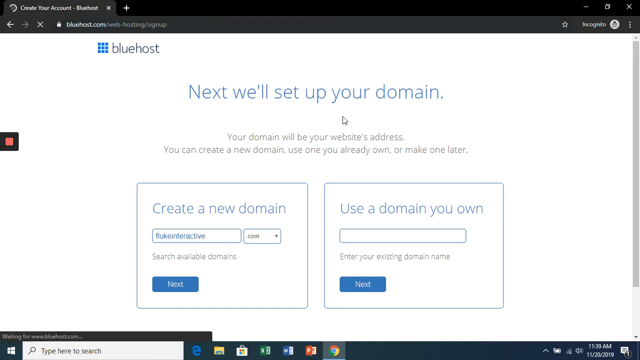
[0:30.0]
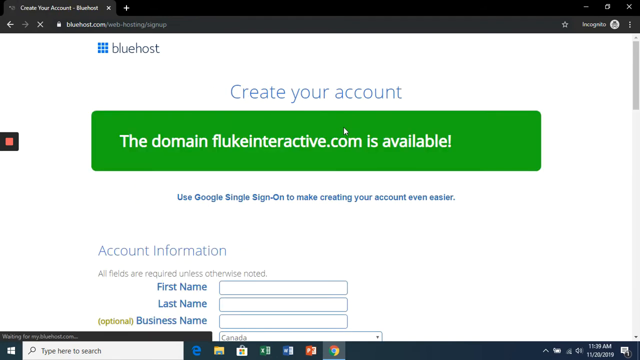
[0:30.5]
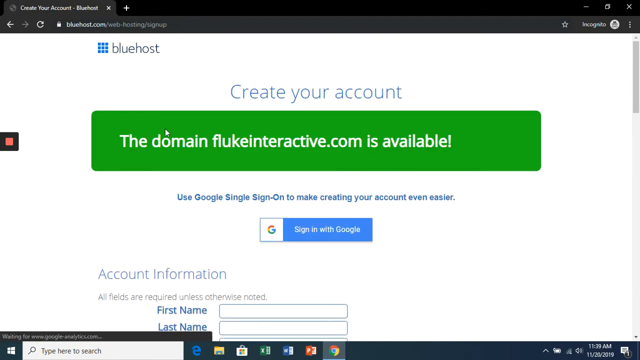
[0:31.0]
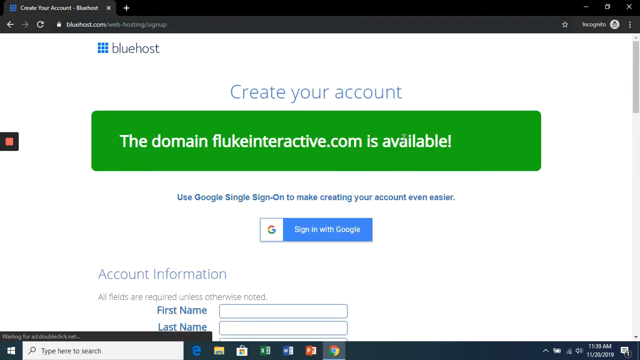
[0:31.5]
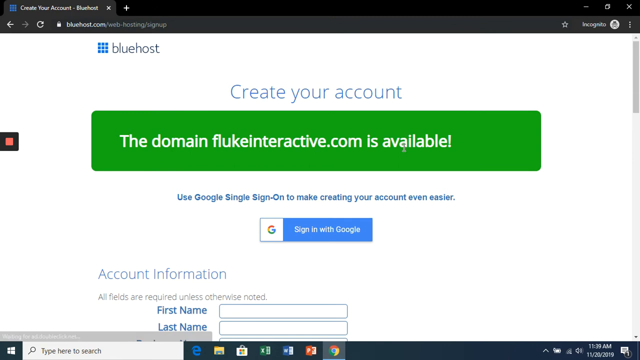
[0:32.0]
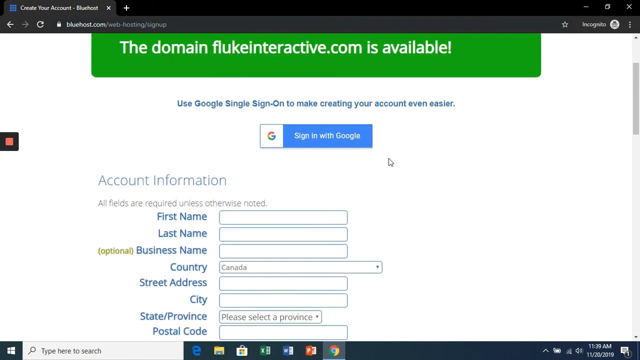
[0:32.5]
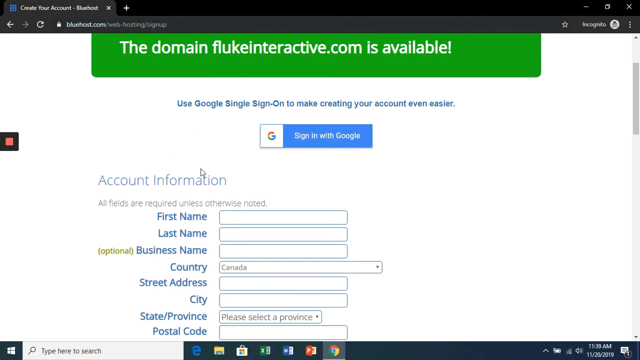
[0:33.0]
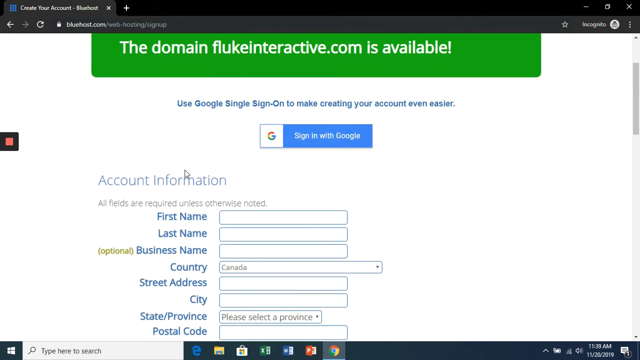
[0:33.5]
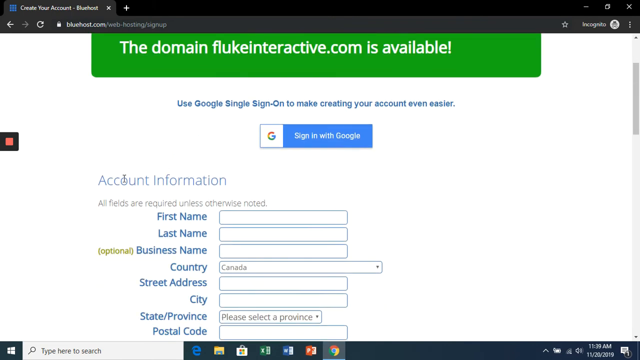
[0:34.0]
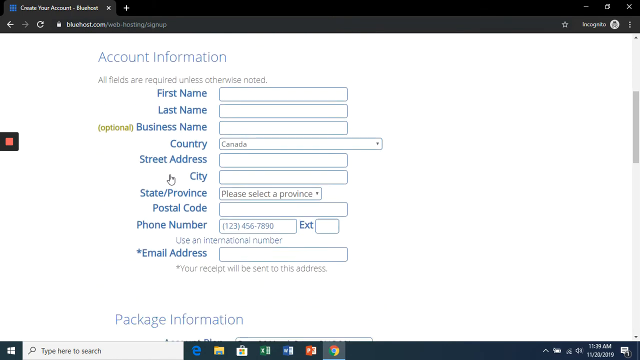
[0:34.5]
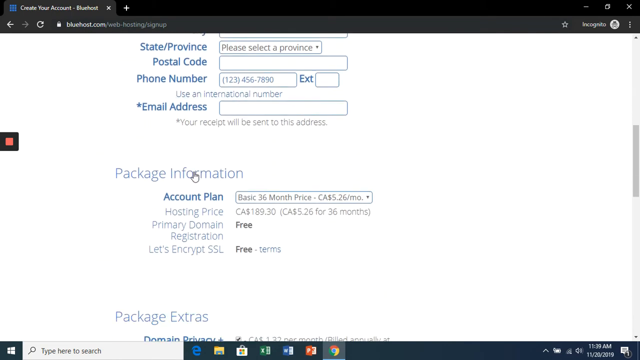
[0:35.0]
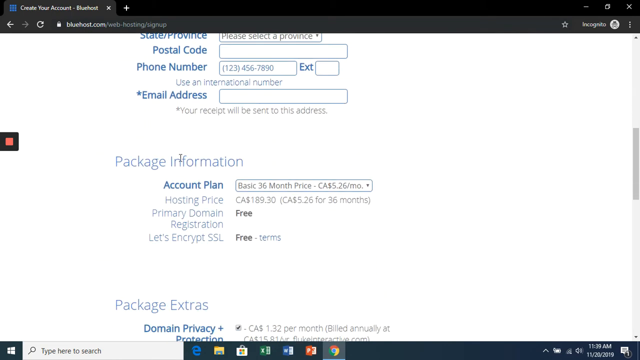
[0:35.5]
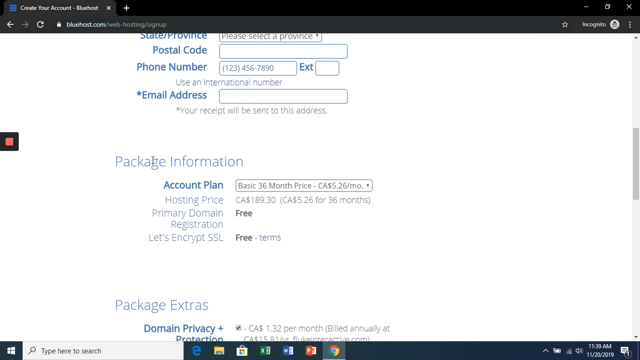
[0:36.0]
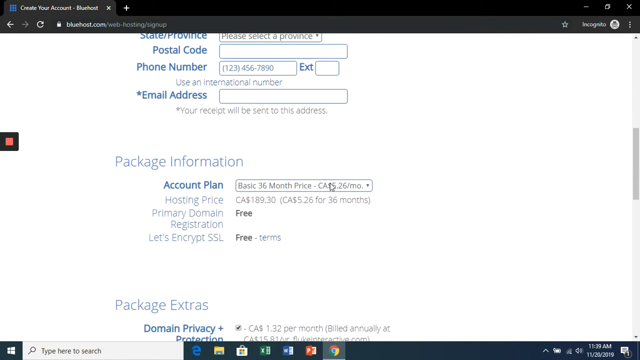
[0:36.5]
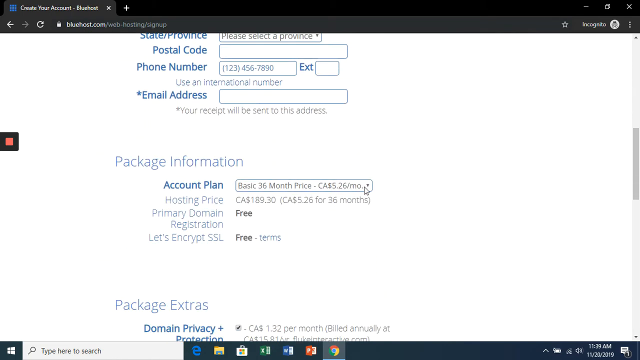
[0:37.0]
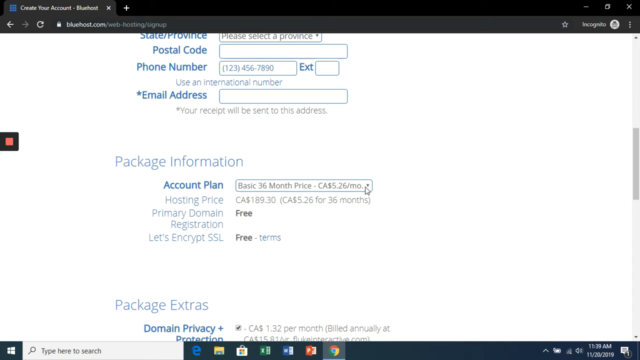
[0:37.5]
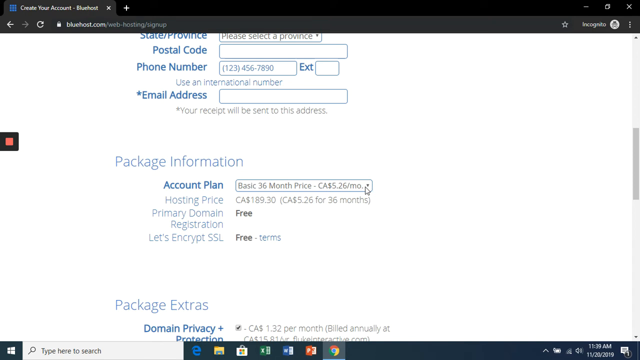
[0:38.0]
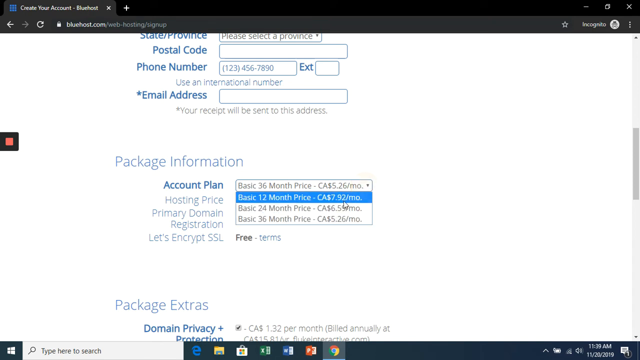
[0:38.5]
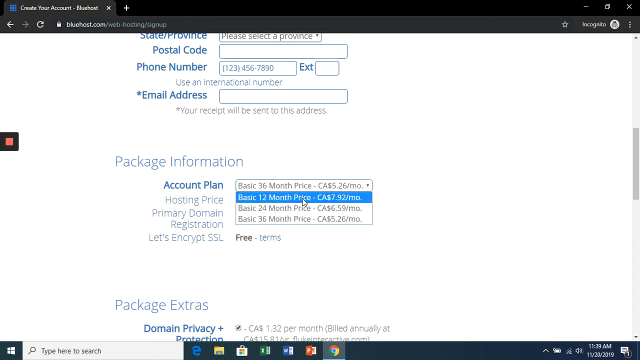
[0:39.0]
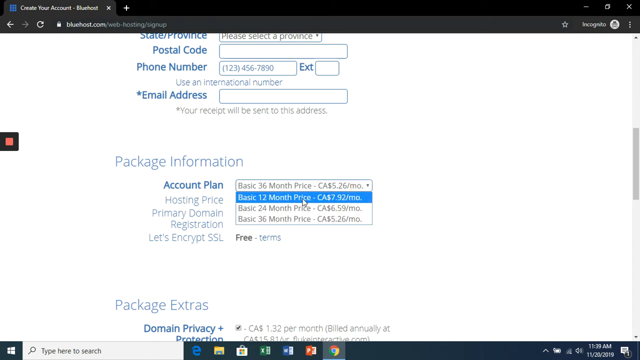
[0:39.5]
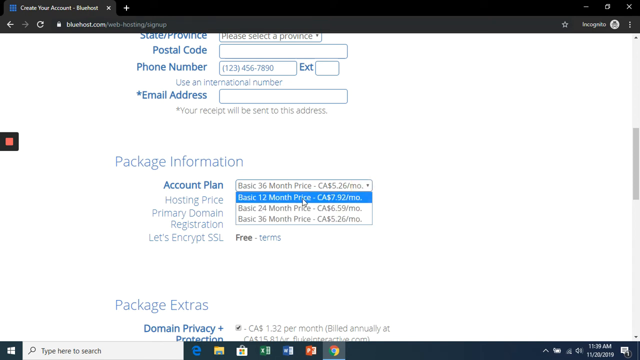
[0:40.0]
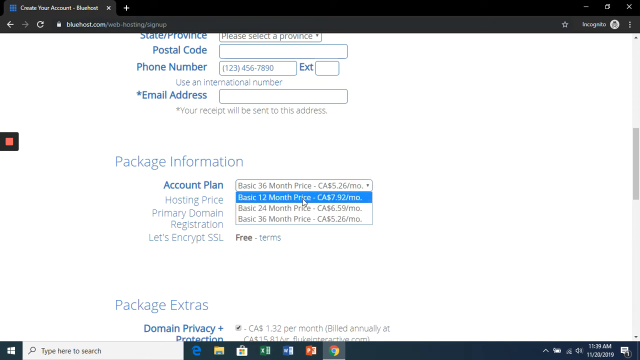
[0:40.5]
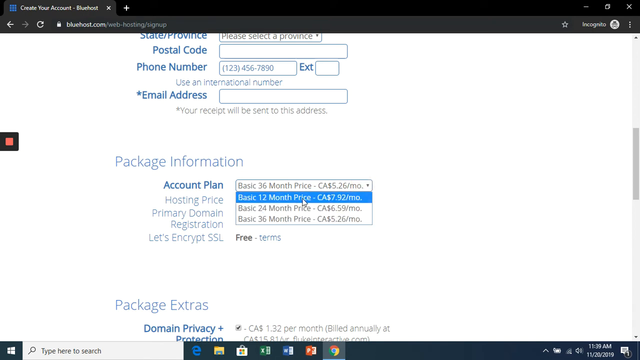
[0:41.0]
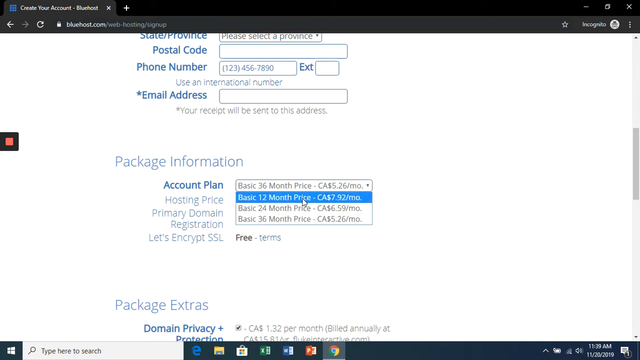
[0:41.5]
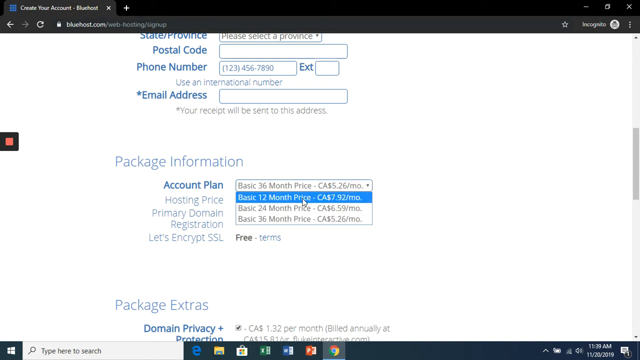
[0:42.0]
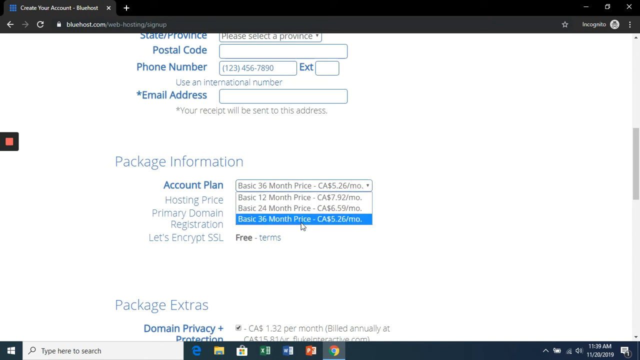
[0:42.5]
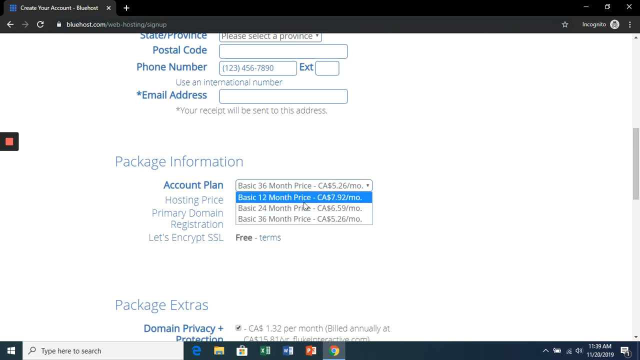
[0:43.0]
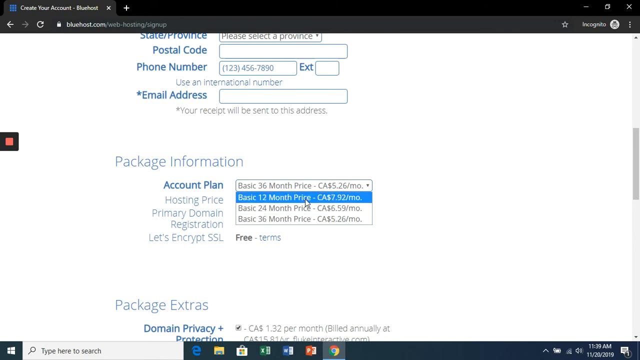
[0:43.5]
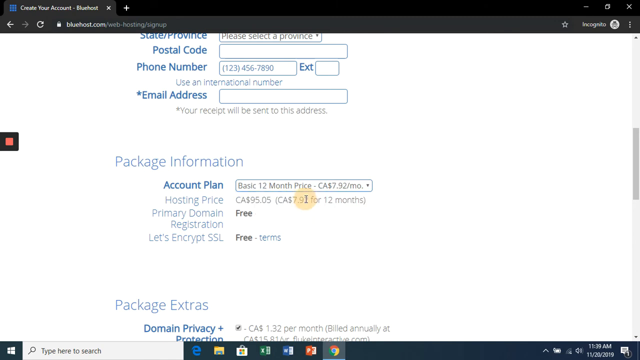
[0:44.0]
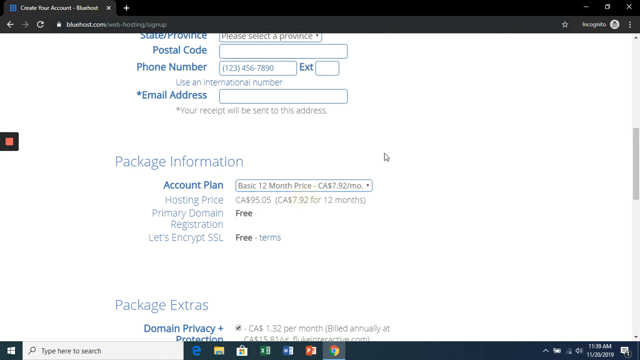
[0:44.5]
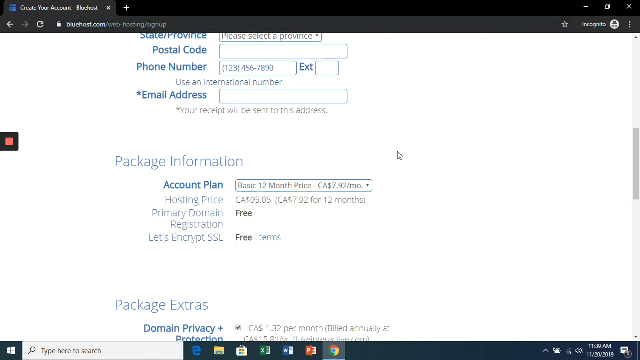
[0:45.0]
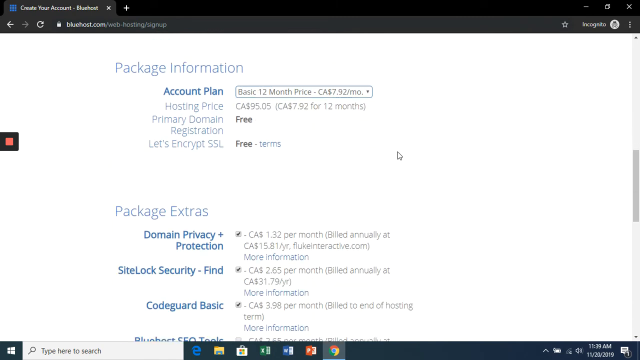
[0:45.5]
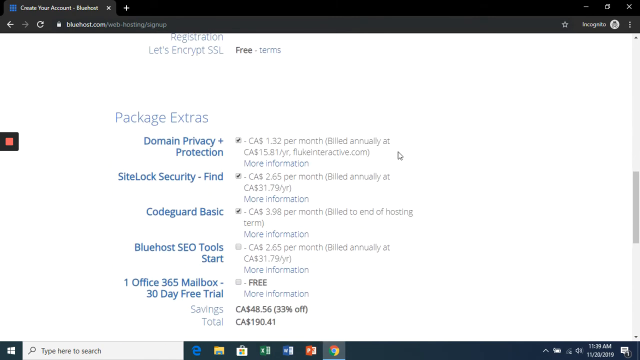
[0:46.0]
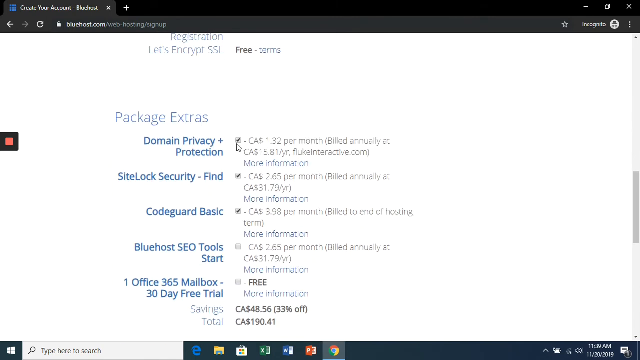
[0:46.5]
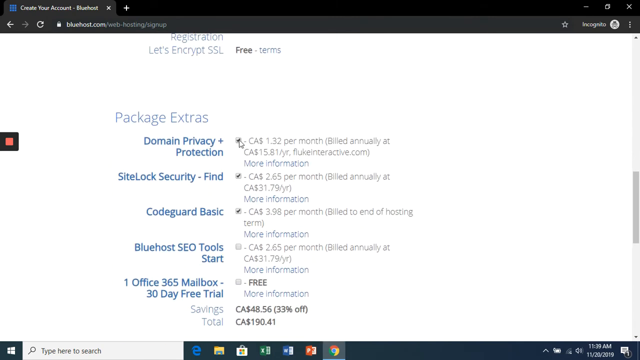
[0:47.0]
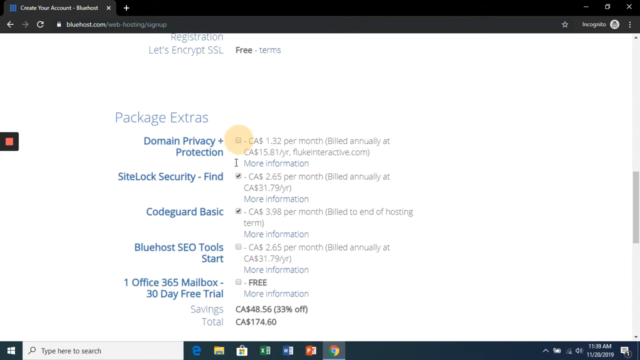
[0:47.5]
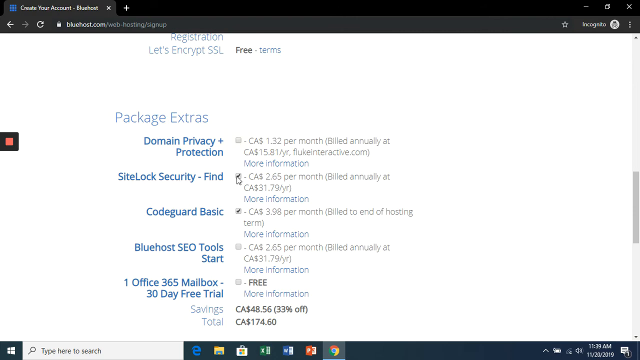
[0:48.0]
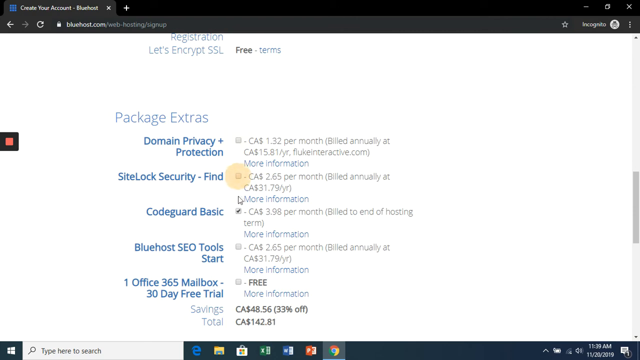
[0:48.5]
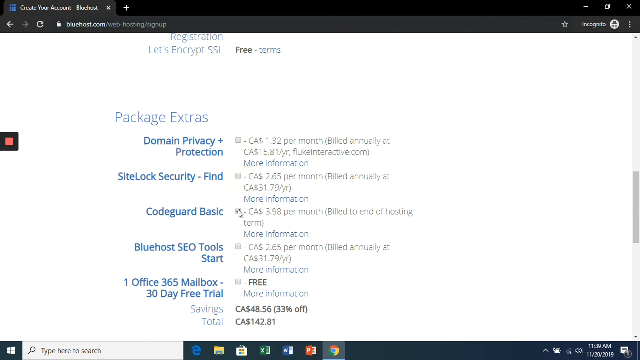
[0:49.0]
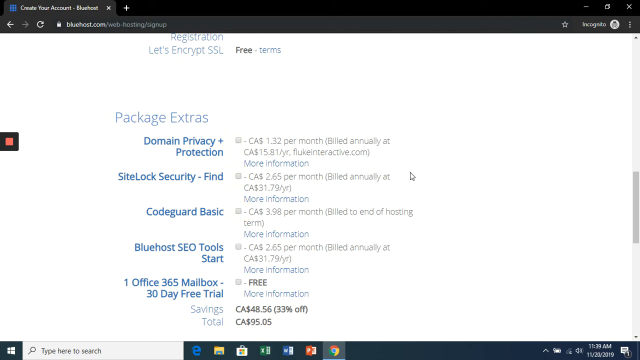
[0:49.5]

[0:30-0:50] The user navigates to another Bluehost.com screen, the create your account screen, which has a white background; no physical subjects are visible. Below this is a sort of green subsection with white text saying that the domain Luke Interactive, the one just created, is available, along with an option to use Google sign-on to make creating the account easier. The screen includes account information with different input fields, package information, and an account plan with 12-month, 24-month or 36-month pricing, as well as bonuses such as package extras, domain privacy protection, site lock security, code guard and some other options. The user scrolls to the bottom of the screen.